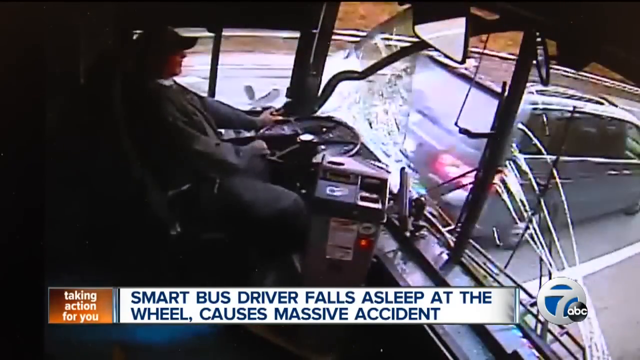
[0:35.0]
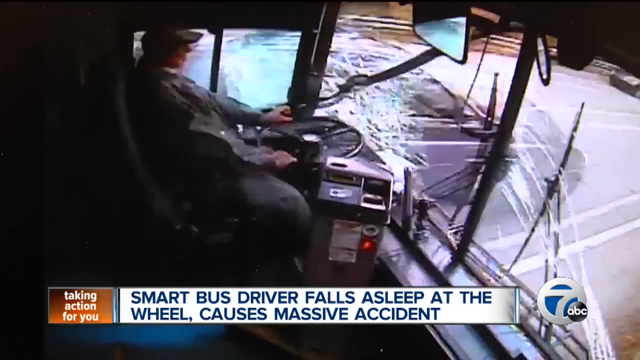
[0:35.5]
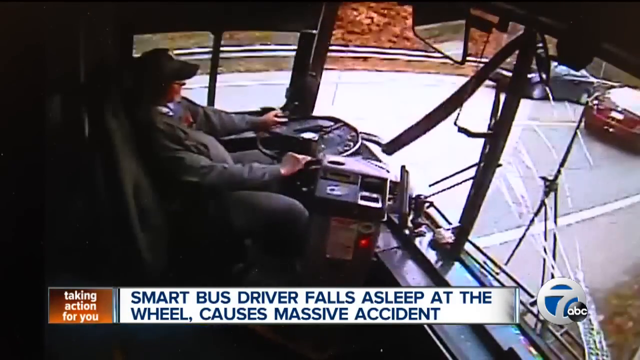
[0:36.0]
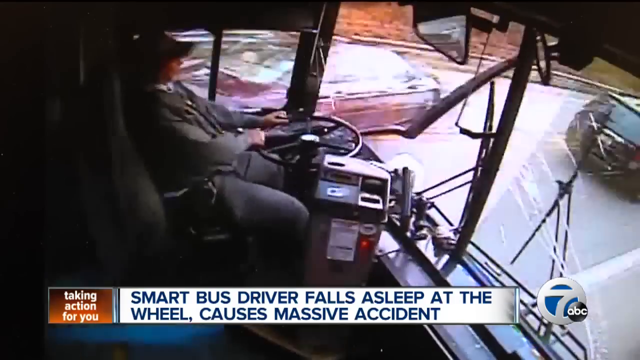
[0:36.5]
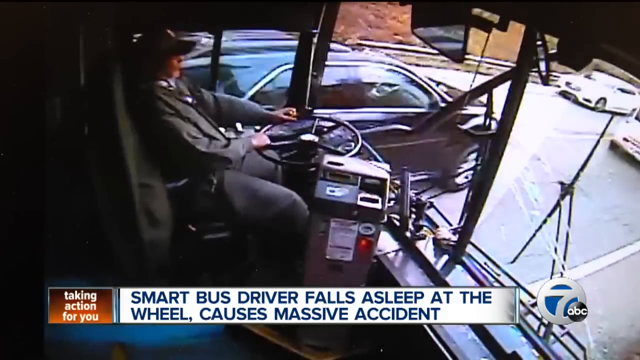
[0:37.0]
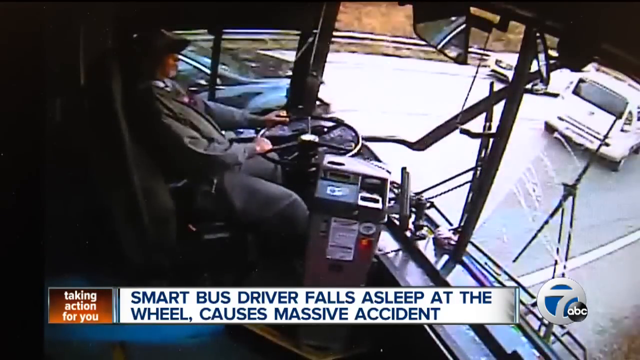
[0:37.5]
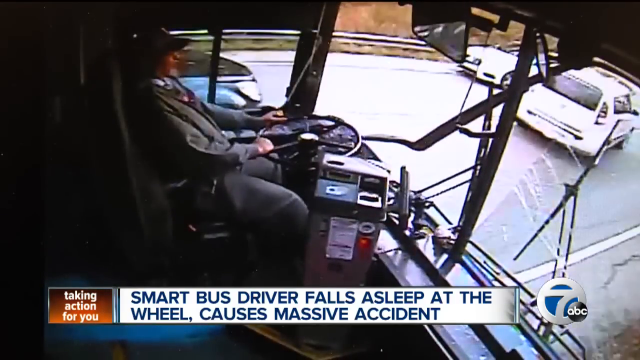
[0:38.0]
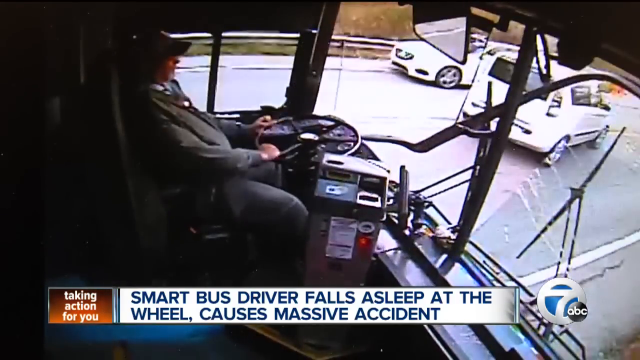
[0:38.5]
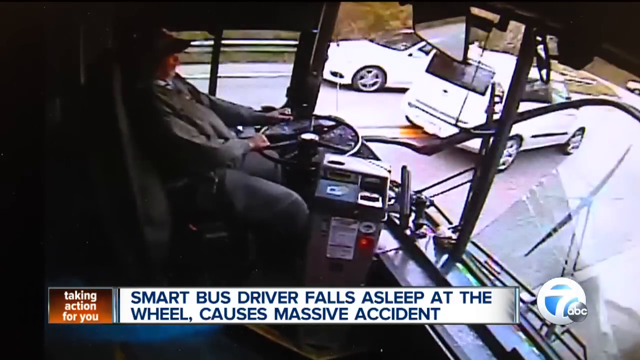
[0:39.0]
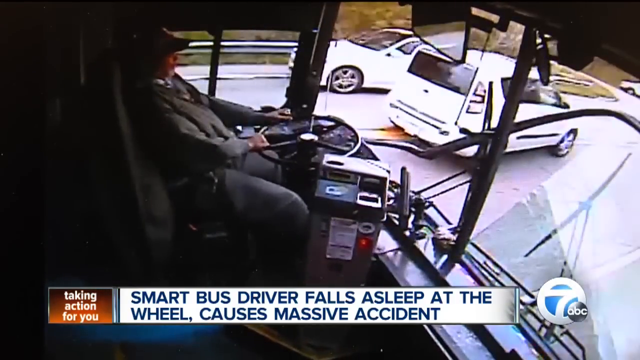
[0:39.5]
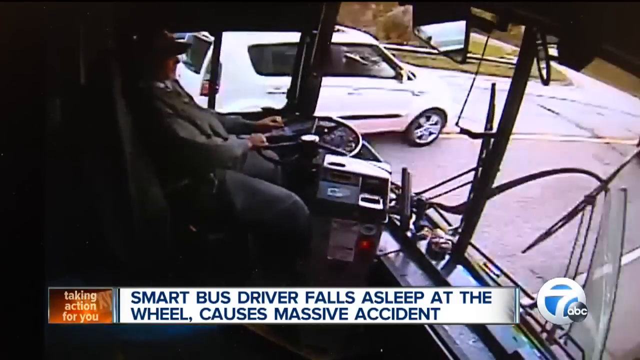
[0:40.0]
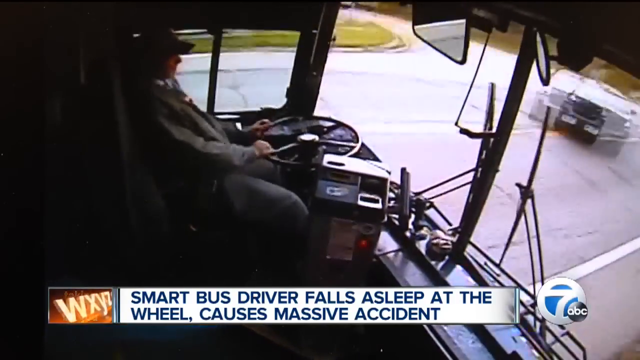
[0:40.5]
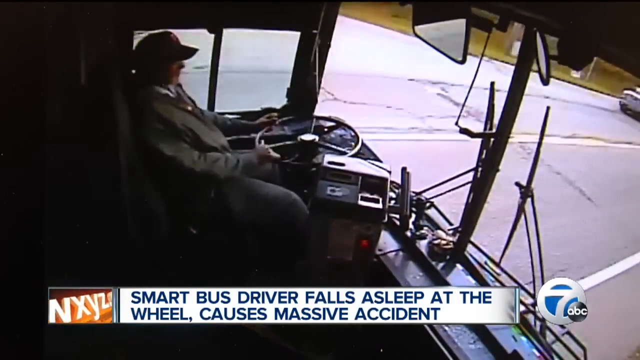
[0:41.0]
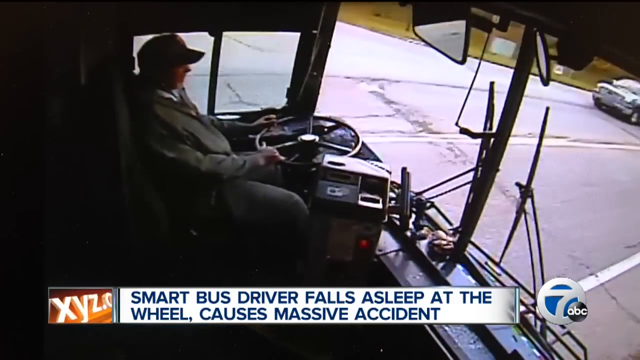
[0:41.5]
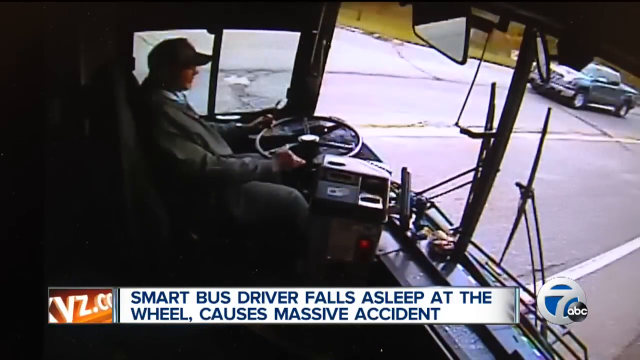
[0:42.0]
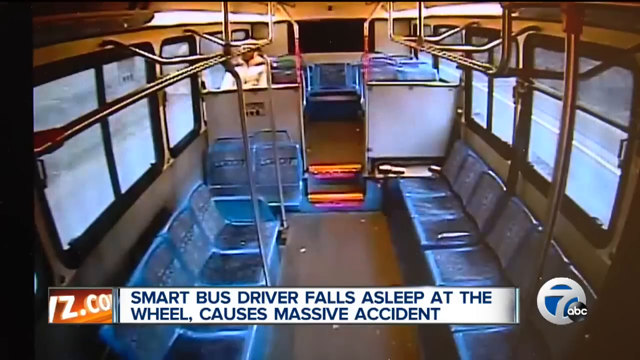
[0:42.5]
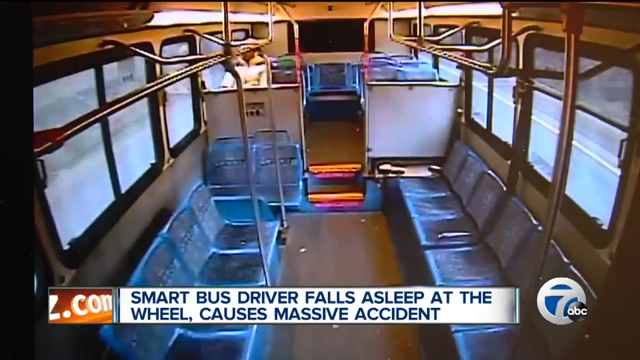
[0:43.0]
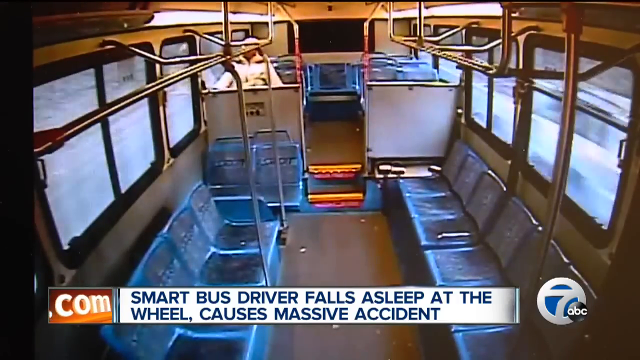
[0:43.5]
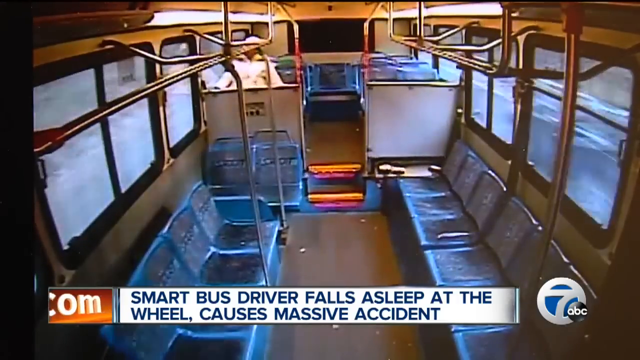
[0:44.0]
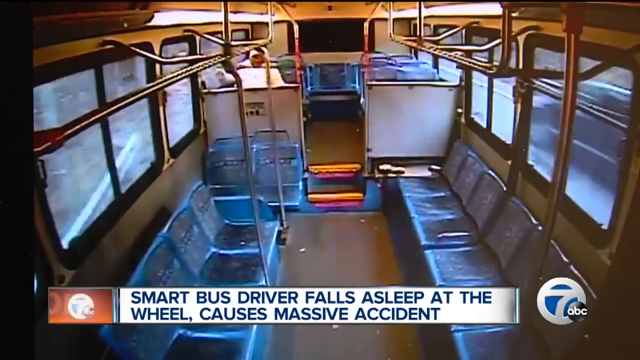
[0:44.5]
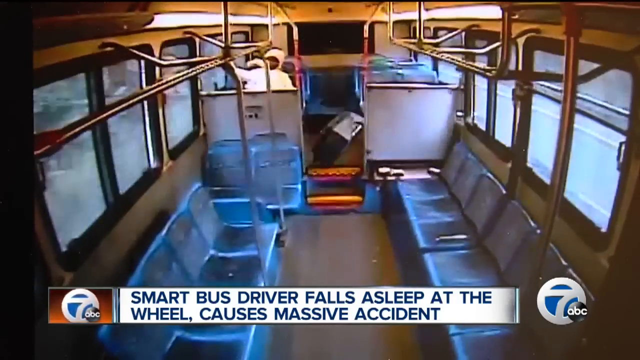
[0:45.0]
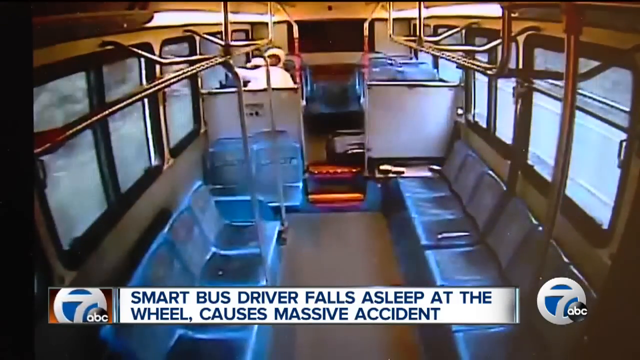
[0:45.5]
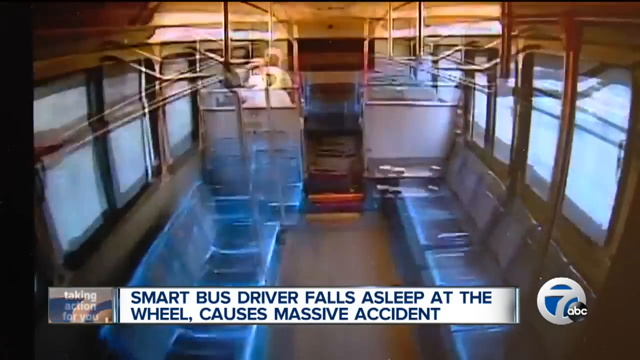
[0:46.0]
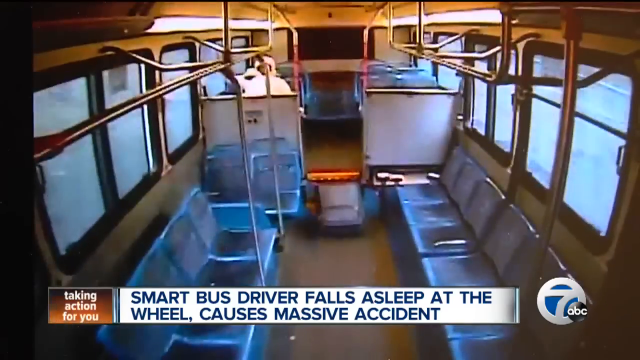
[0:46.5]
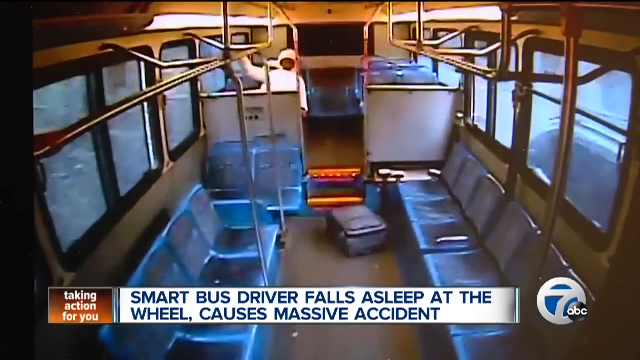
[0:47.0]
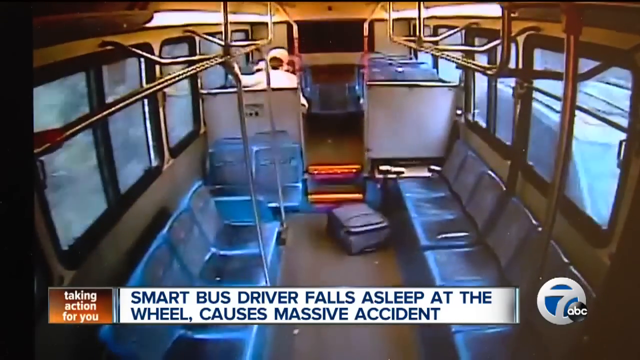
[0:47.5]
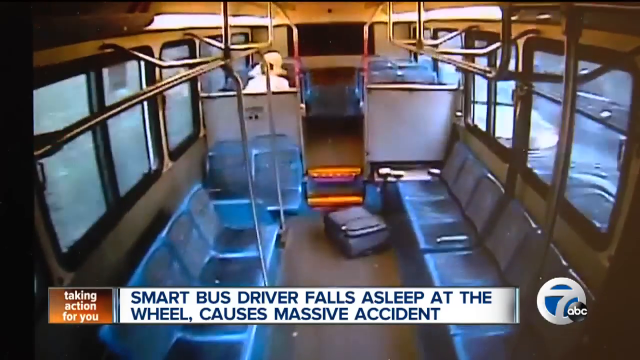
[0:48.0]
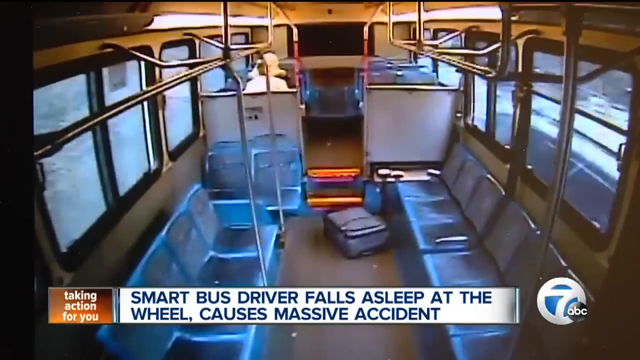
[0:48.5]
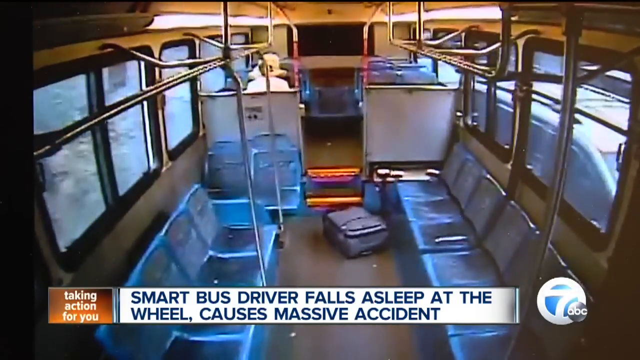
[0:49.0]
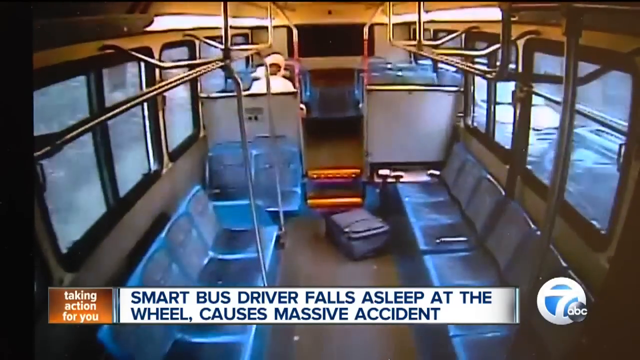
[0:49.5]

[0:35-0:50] The footage of the crash impact replays, shown in forward and backward motion. Another point of view inside the bus shows it looking fairly empty, with not many people. A suitcase appears to have fallen over, and a person braces for the impact. No one inside the bus seems to be injured, though the impact looks considerable. The driver appears to have gone up against the windshield; the driver's condition is unclear.